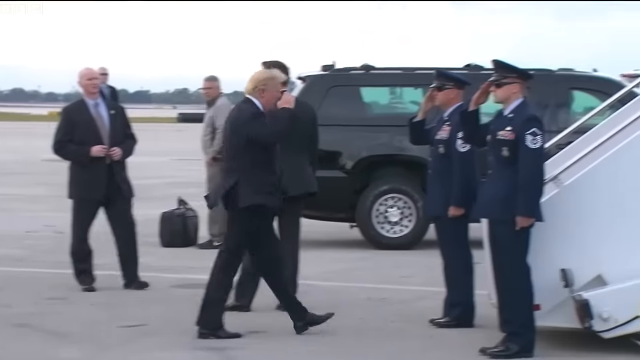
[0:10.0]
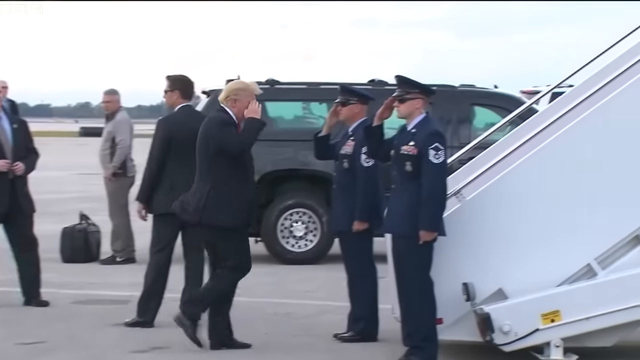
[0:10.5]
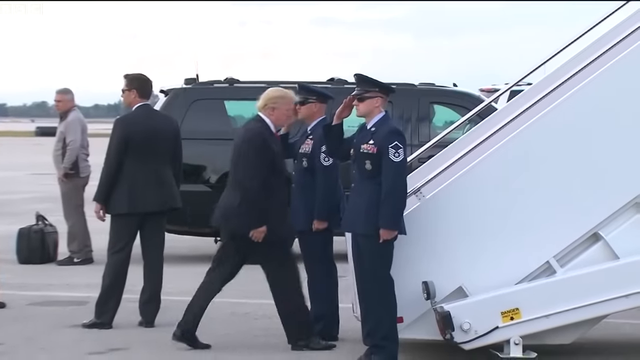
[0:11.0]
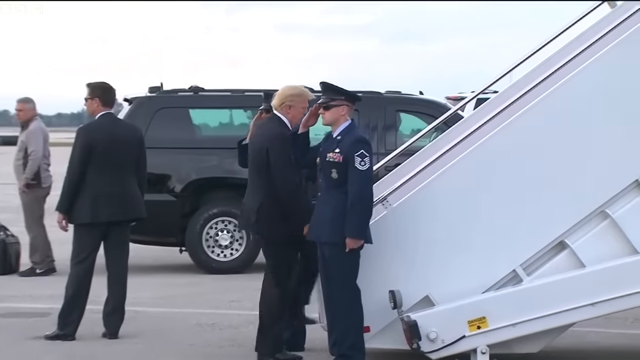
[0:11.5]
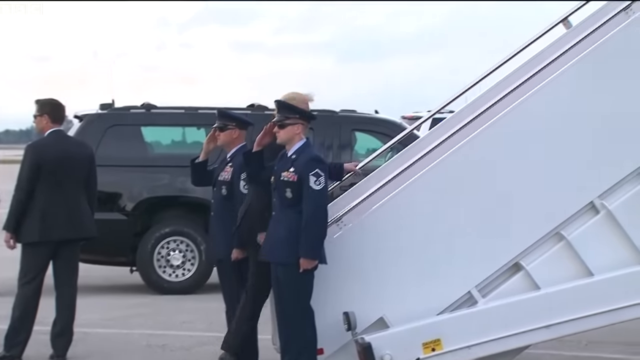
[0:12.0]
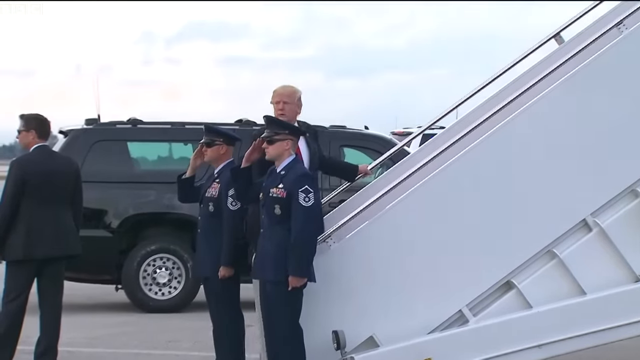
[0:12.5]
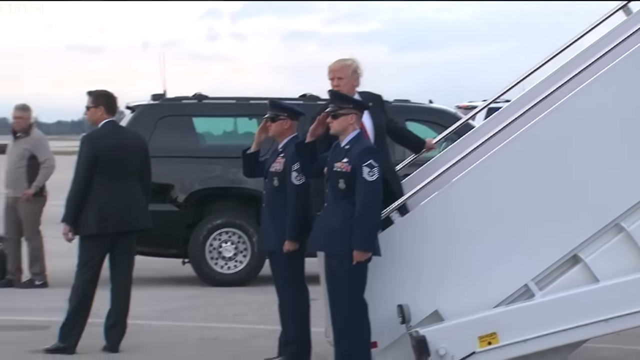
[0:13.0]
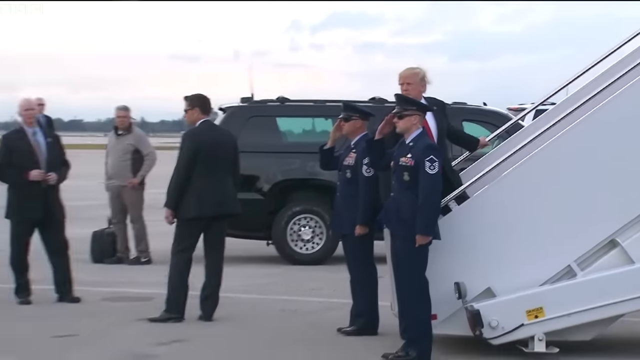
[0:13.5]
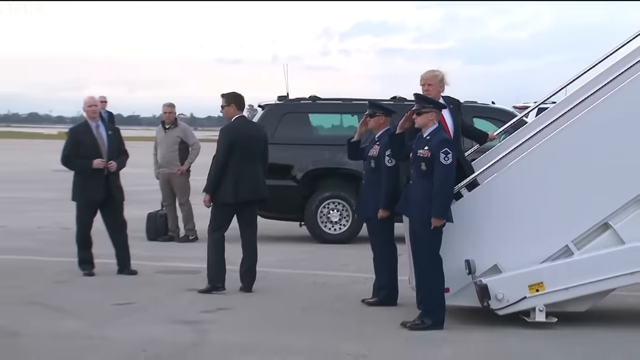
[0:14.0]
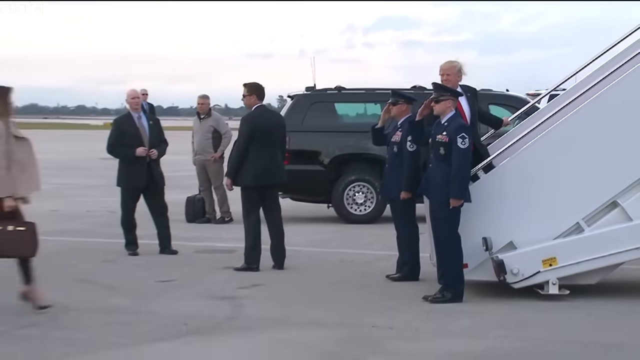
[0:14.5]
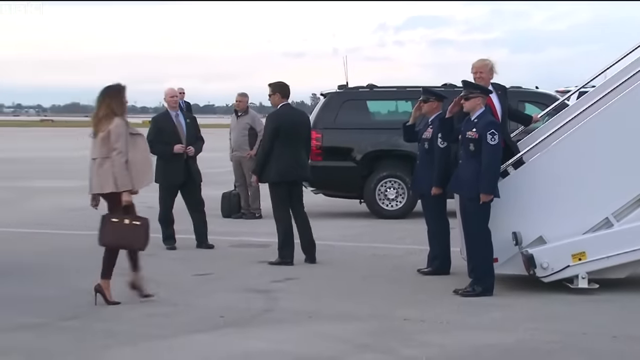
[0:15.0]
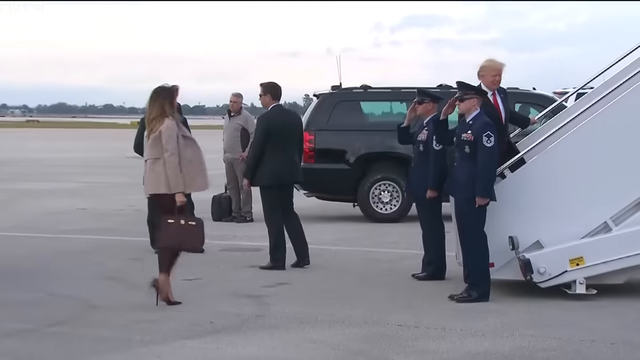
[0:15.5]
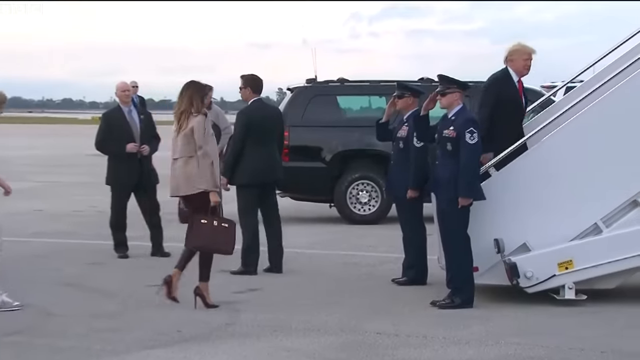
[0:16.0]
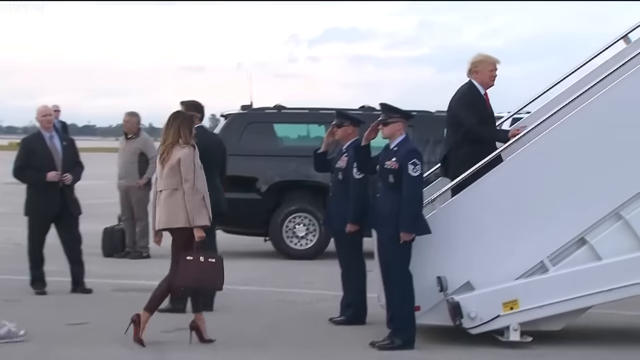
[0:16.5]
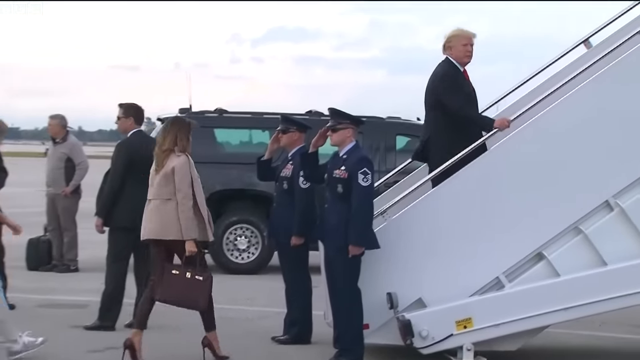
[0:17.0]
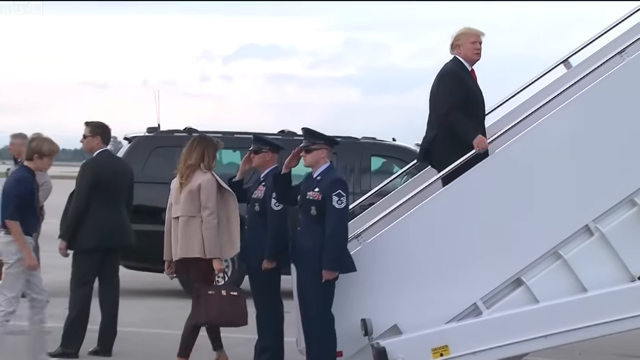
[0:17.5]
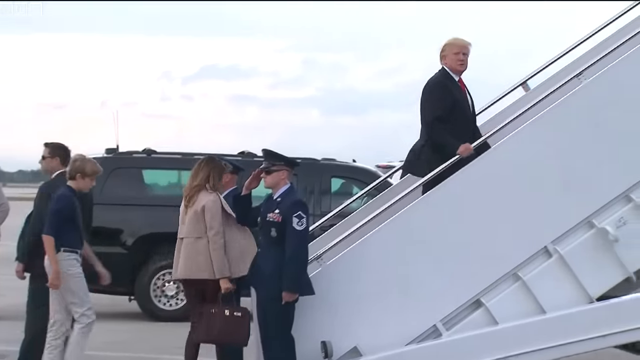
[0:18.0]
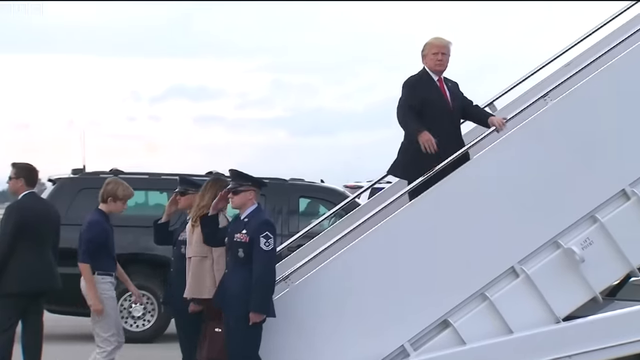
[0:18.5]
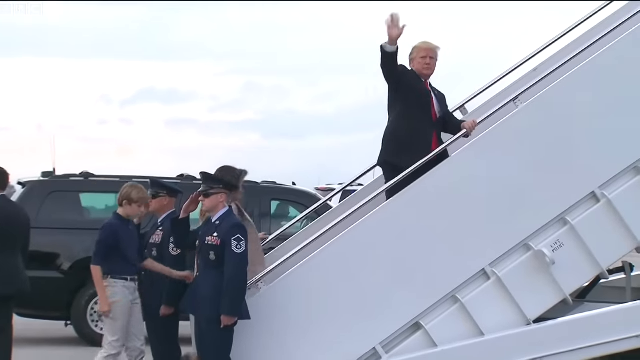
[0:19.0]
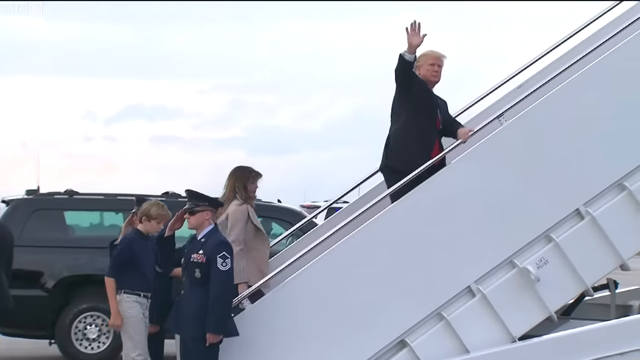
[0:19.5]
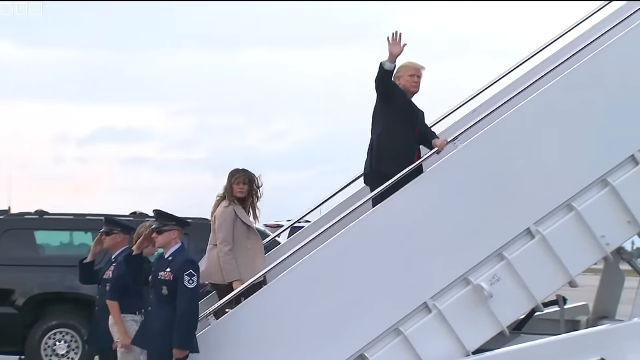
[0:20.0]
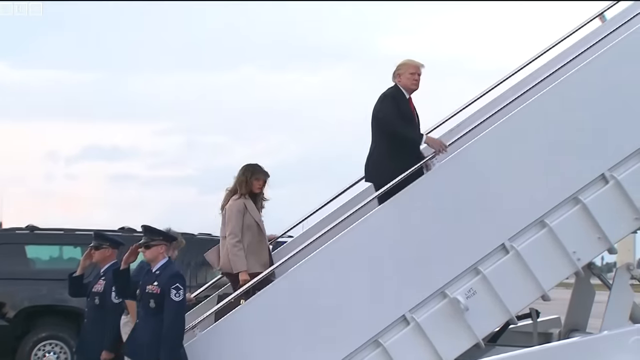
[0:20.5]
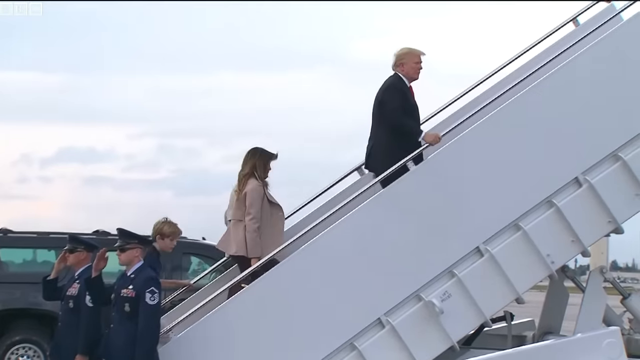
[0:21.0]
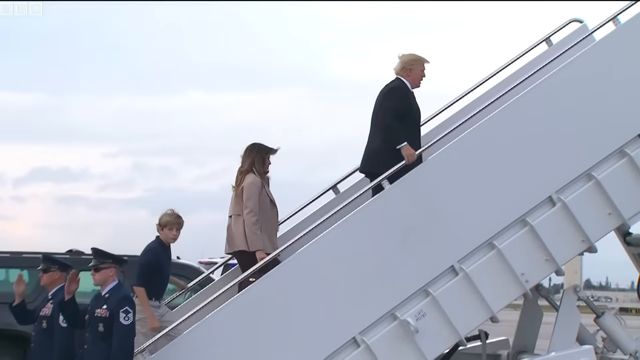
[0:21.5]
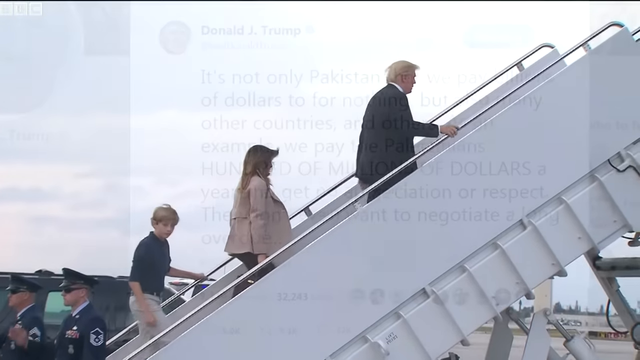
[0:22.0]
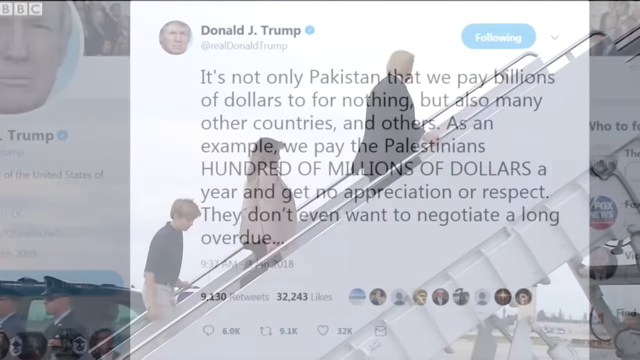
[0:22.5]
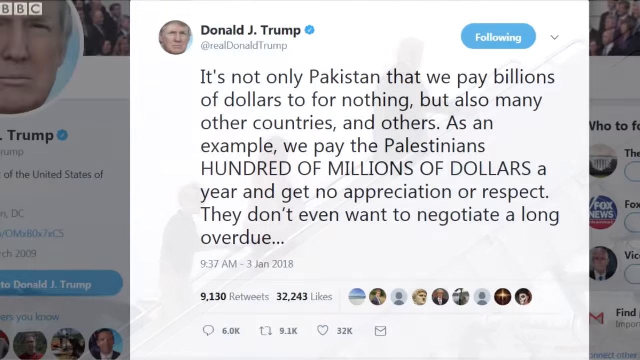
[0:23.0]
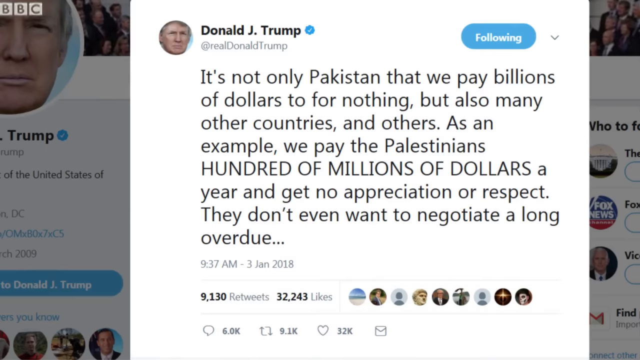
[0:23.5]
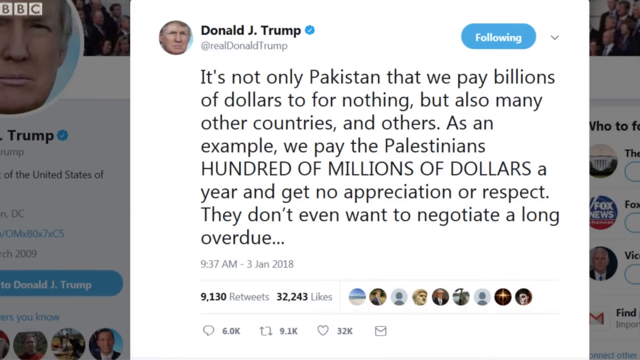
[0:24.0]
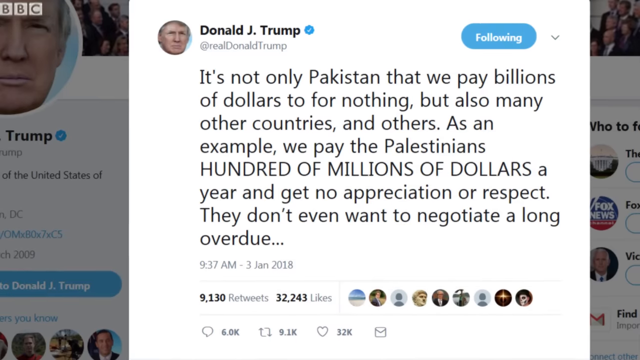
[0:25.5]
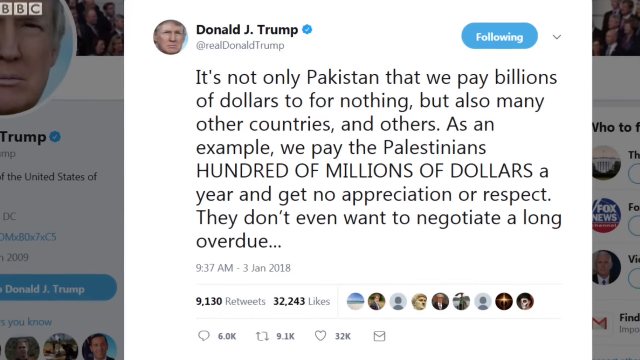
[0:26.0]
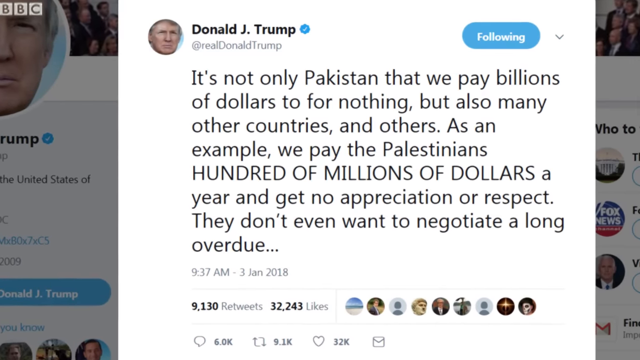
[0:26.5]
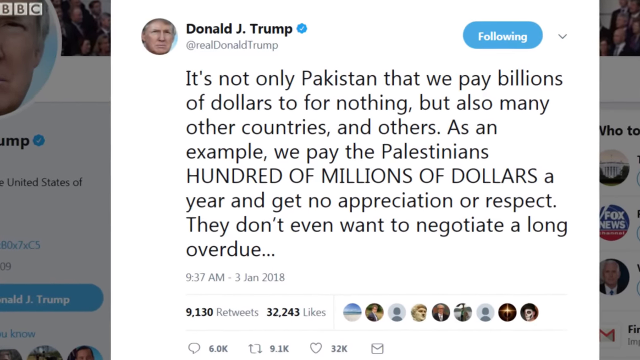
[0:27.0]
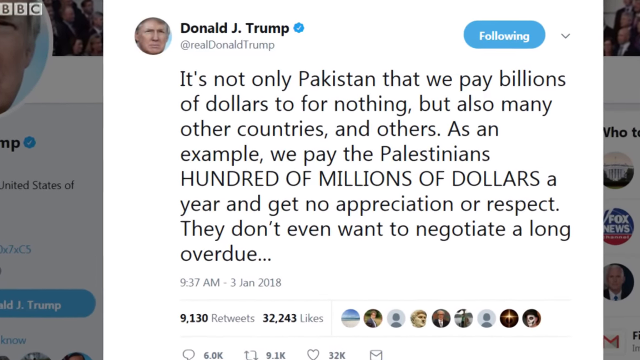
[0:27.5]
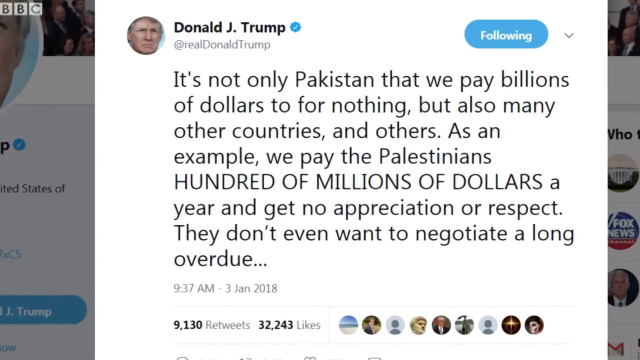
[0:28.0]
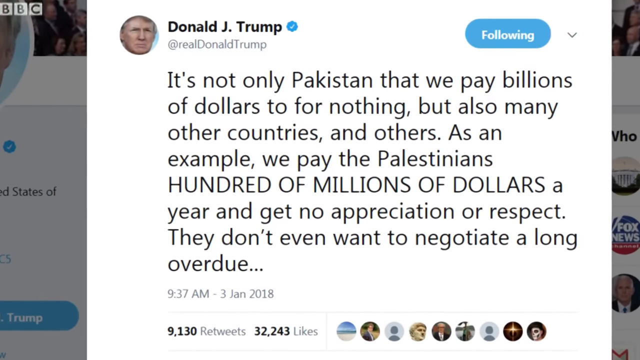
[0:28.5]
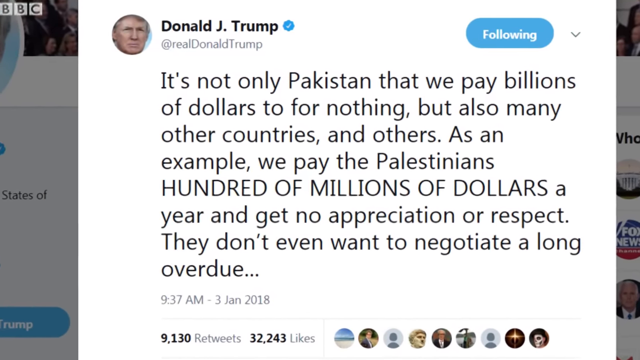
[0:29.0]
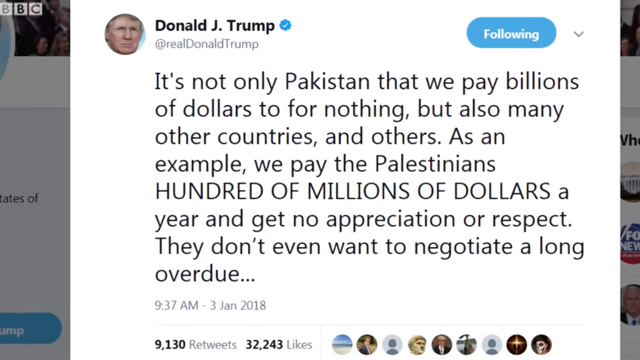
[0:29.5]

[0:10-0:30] Trump walks towards the metallic stairs used to board an airplane from the landing strip. At the bottom of the stairs two military officials stand, one on each side, saluting with their right hands as he gets near them. He salutes them back with his right hand, climbs the first two steps, then stops and looks behind him. The camera opens up a bit to show Melania approaching, walking behind him, followed by their son Barron, and the three start climbing the stairs. As Trump goes up, he looks over at the people in front of him and waves at them with his right hand. Melania does not look at them; Barron looks at them but does not wave. The screen then transitions to a post from Donald Trump's Twitter that reads, "It's not only Pakistan that we pay billions of dollars to for nothing, but also many other countries and others. As an example, we pay the Palestinians hundreds of millions of dollars a year and get no appreciation or respect. They don't even want to negotiate a long overdue". The video stays on this post for a few seconds as the camera slowly zooms in on it.